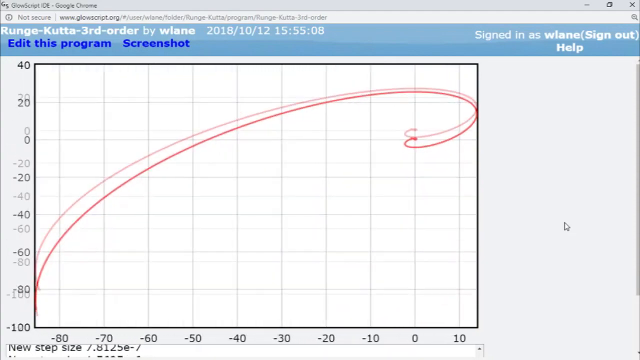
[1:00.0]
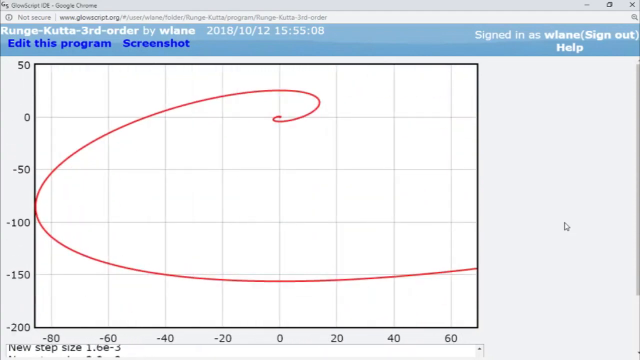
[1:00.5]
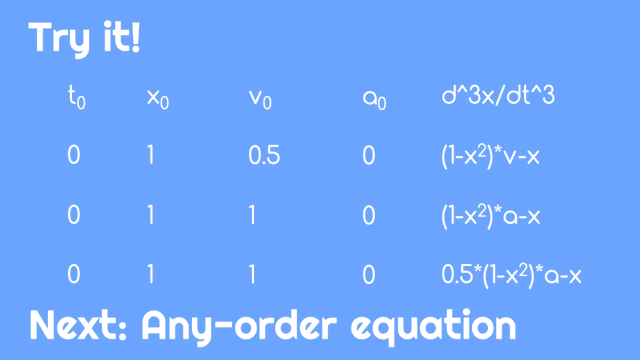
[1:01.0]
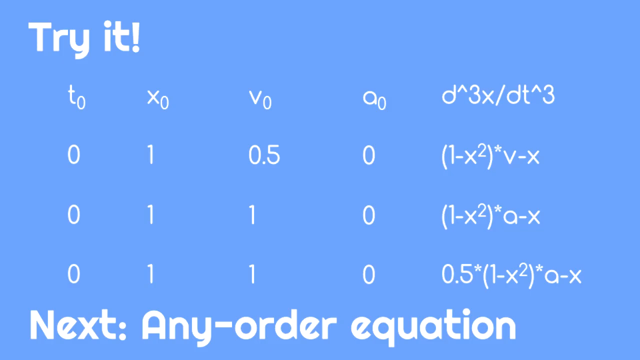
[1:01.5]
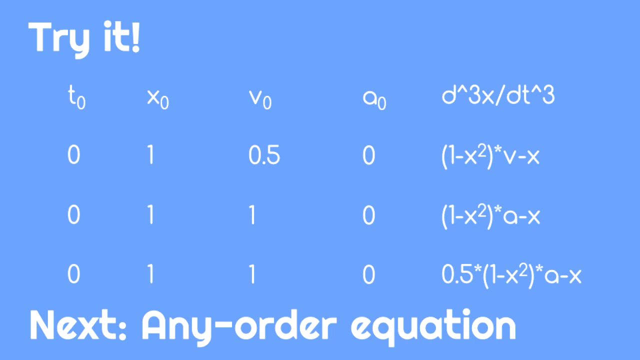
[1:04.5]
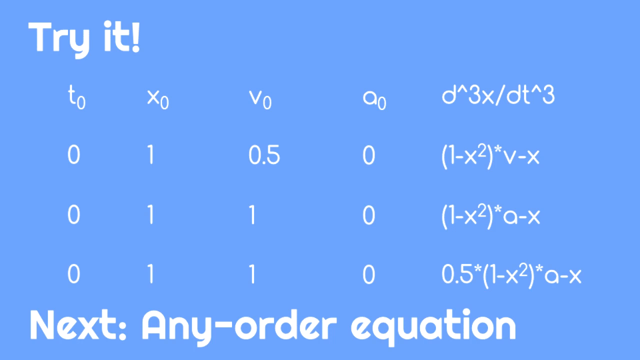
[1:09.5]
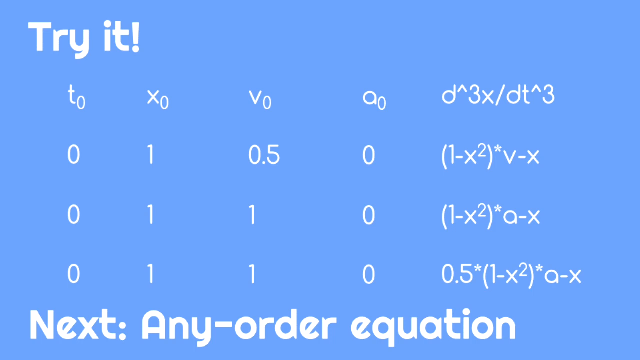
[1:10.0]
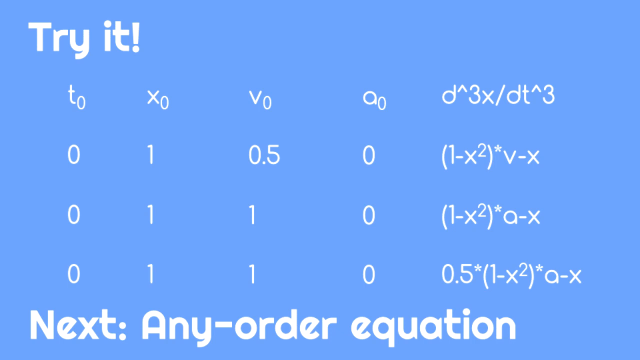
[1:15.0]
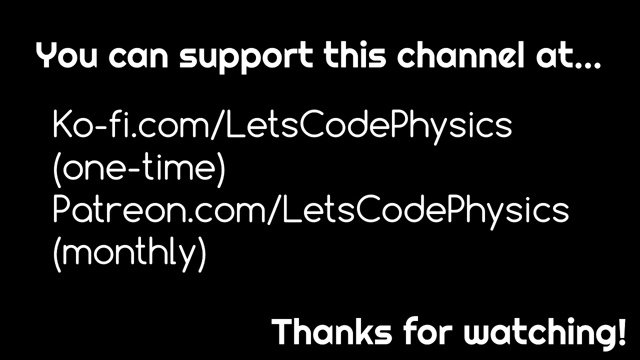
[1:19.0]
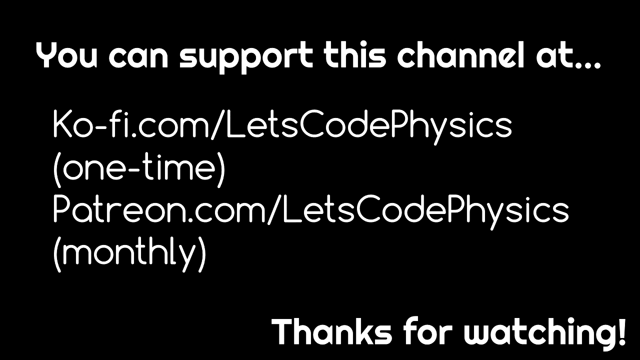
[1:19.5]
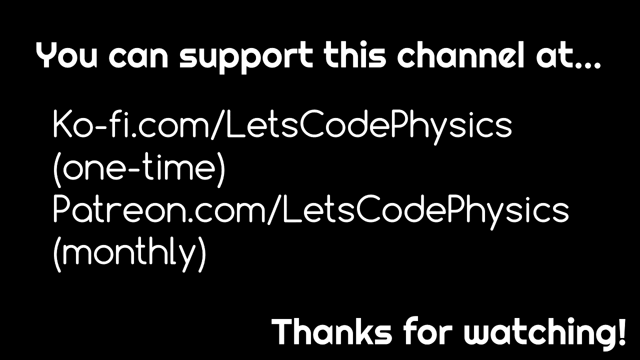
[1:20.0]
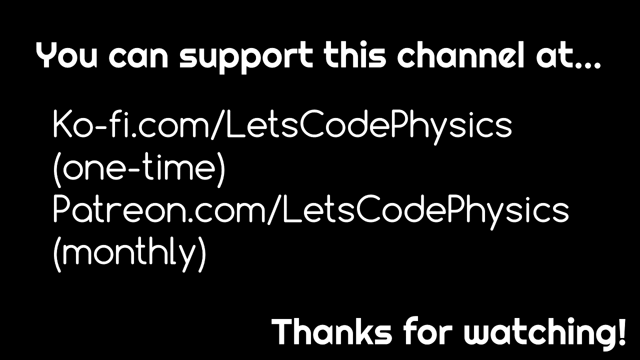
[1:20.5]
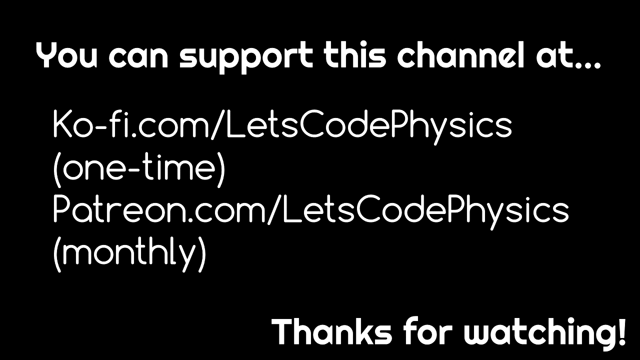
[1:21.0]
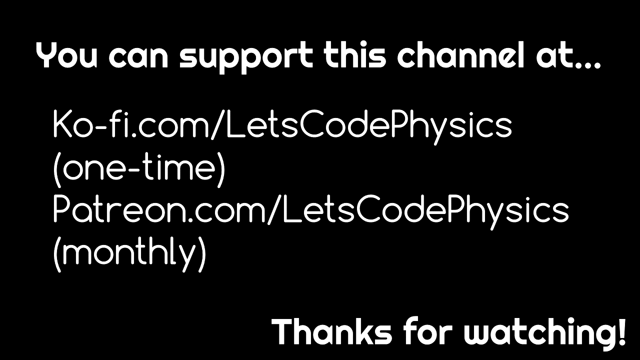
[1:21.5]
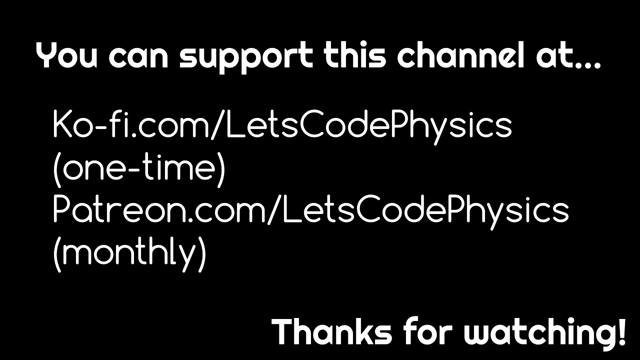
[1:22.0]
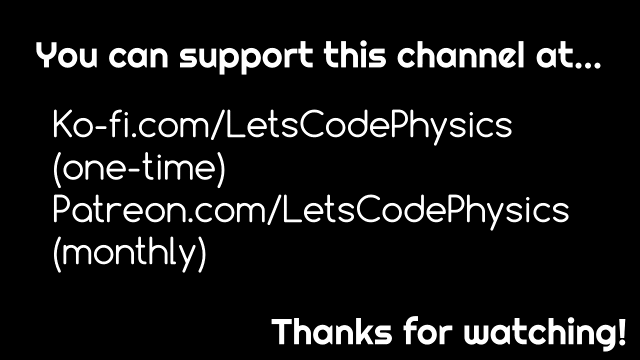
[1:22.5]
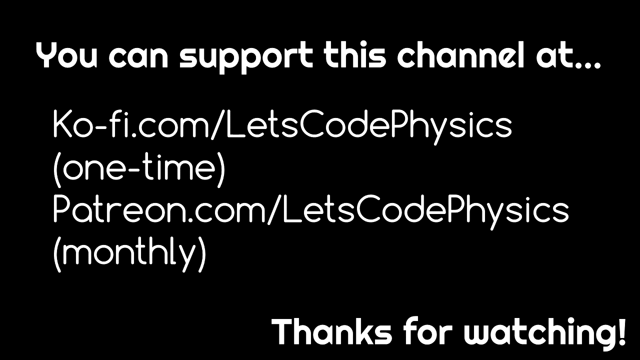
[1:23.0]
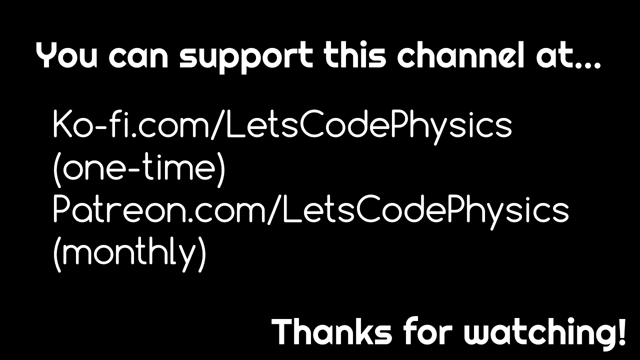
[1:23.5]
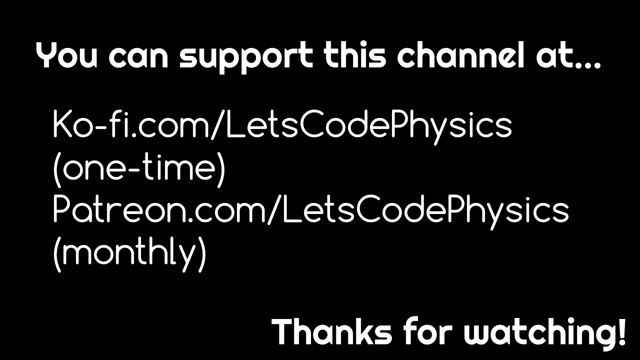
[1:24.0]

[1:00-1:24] A new graph is produced by changing some of the parameters, and two graphs appear on the screen, one on top of the other. It then goes to a single red graph that rotates a full 360 degrees. Next, some numbers are shown with the words "try it", listing t0, x0, v0 and q0 along with the original equation. A mid-video advert appears for Beadaholique.com for beading supplies. The screen then continues to be shown without any explanation of what it means. A goodbye notice follows, asking viewers to support the channel at cofi.com, with "let's code physics".